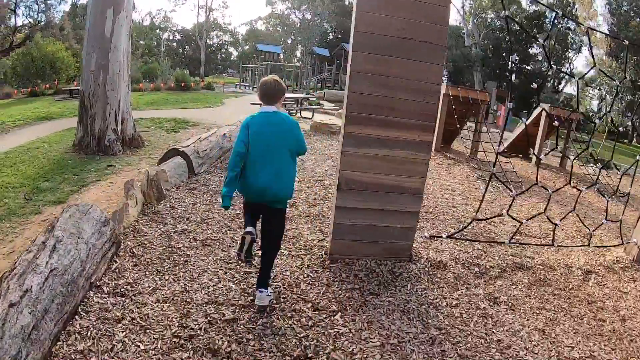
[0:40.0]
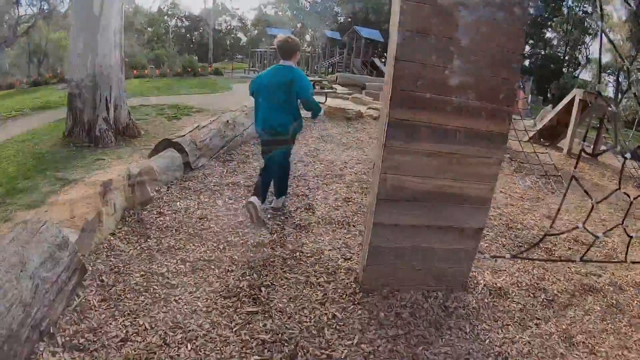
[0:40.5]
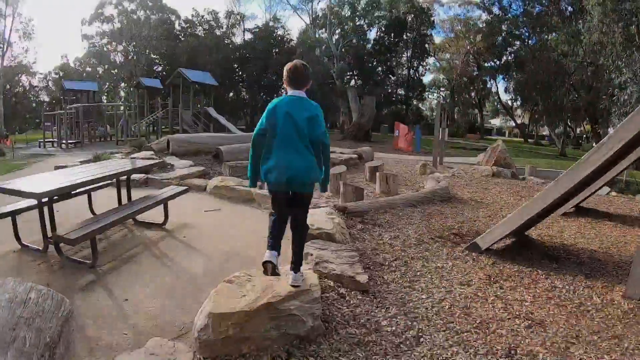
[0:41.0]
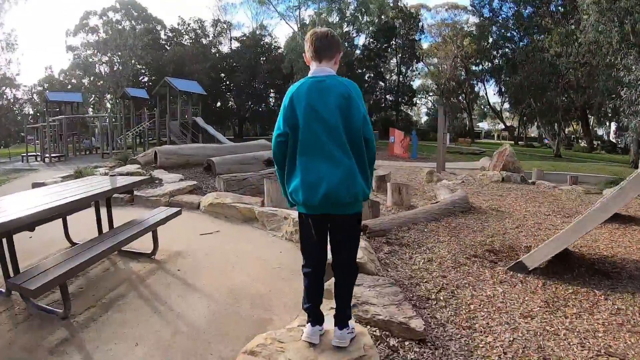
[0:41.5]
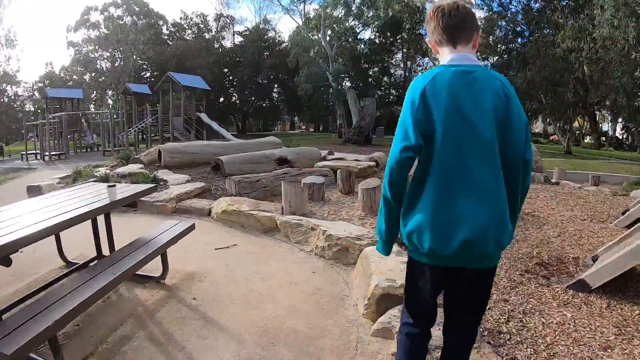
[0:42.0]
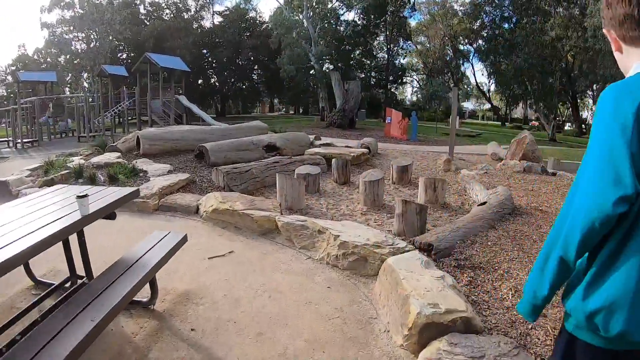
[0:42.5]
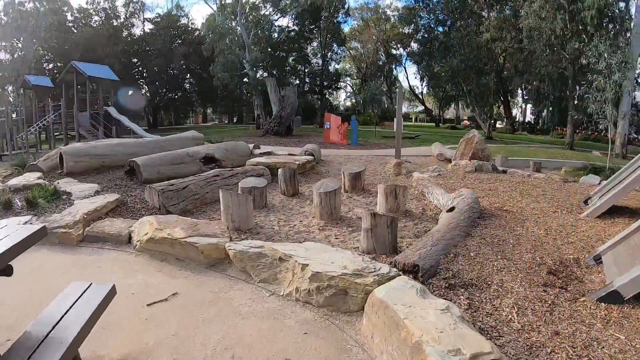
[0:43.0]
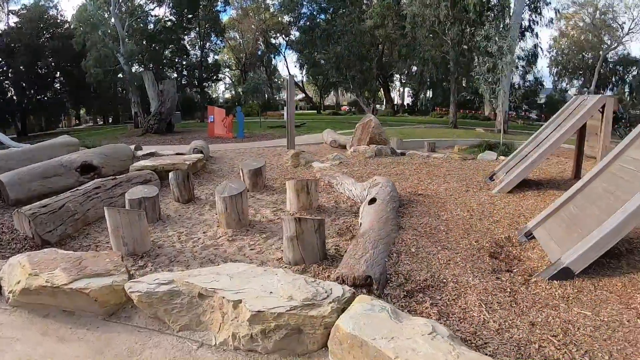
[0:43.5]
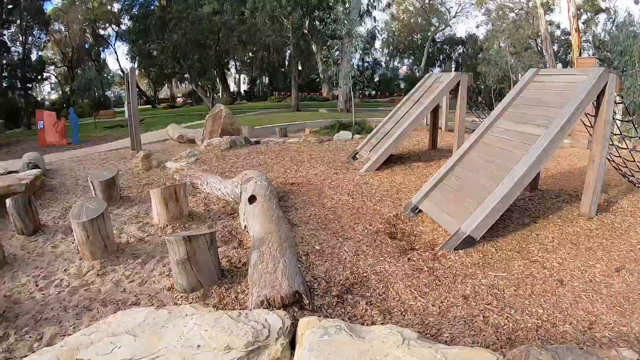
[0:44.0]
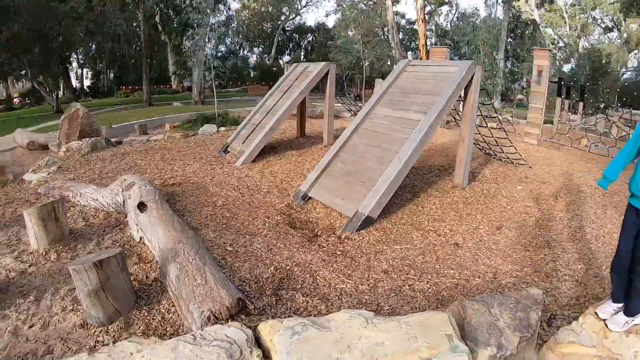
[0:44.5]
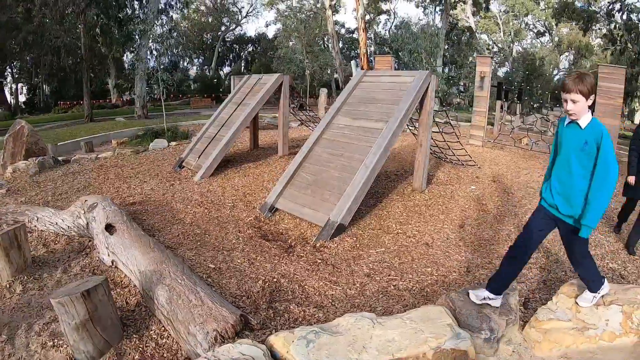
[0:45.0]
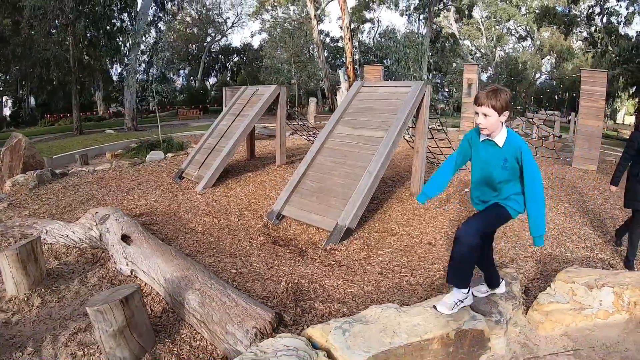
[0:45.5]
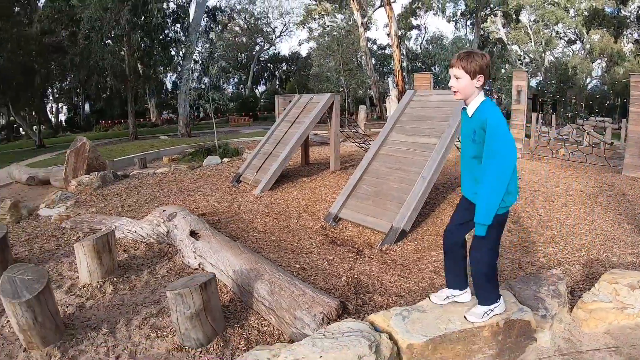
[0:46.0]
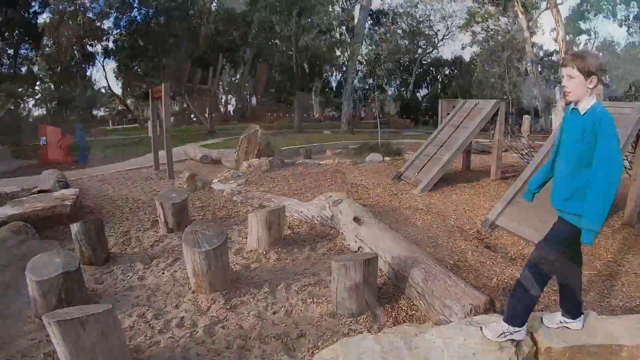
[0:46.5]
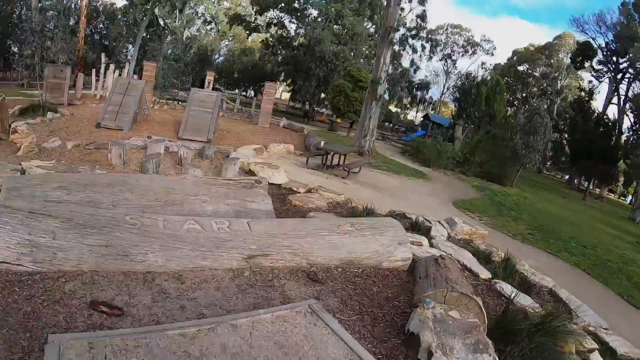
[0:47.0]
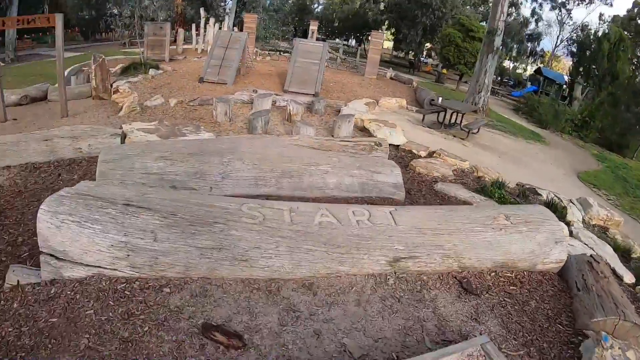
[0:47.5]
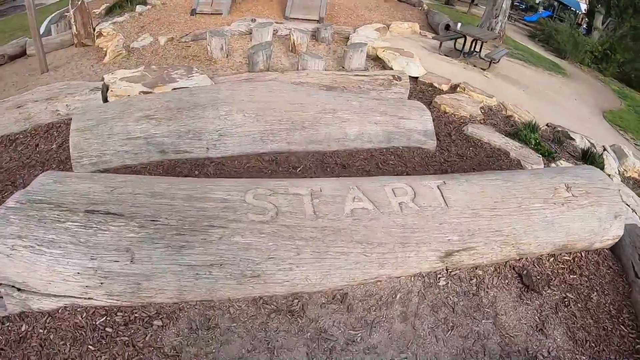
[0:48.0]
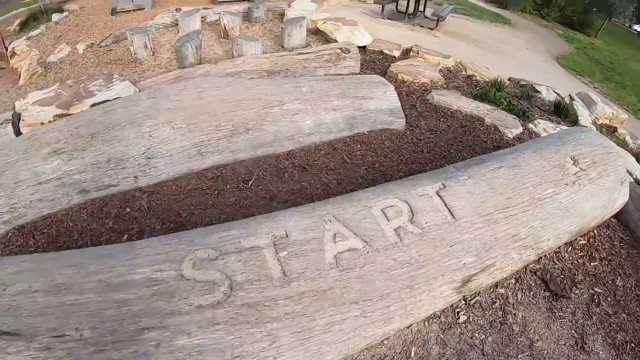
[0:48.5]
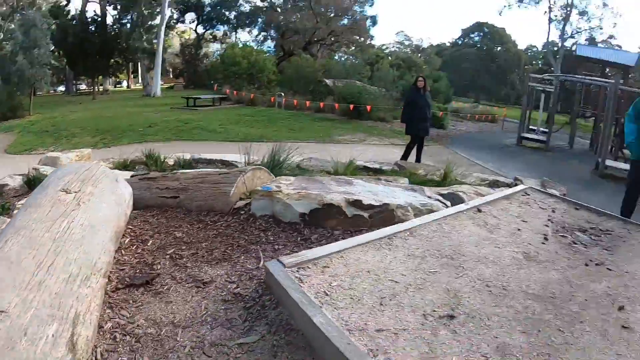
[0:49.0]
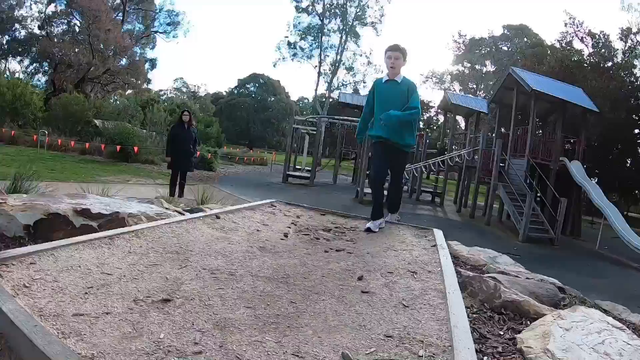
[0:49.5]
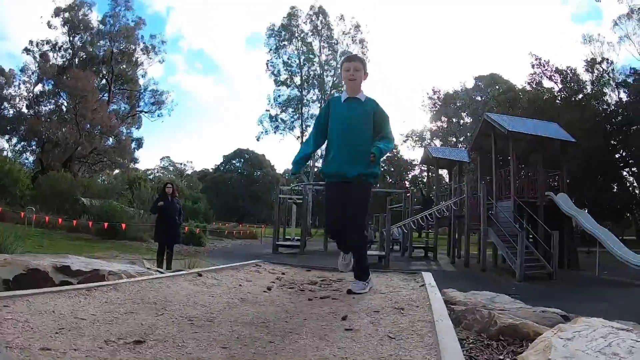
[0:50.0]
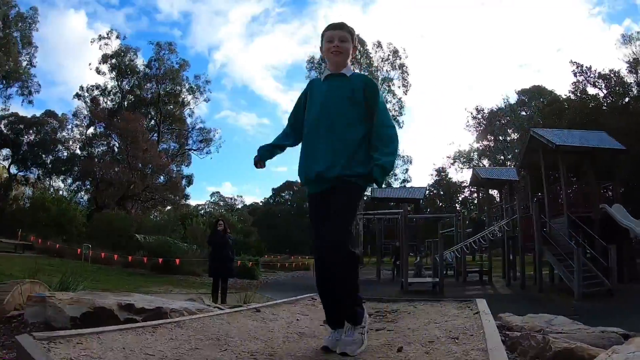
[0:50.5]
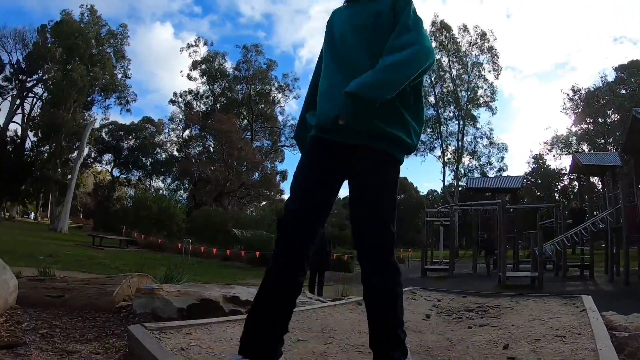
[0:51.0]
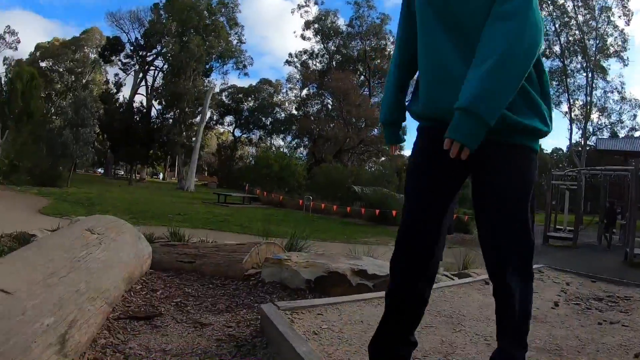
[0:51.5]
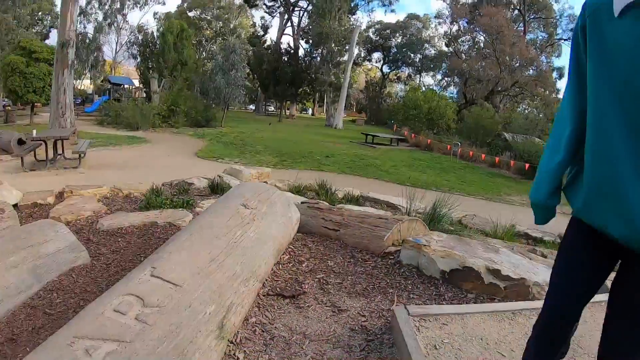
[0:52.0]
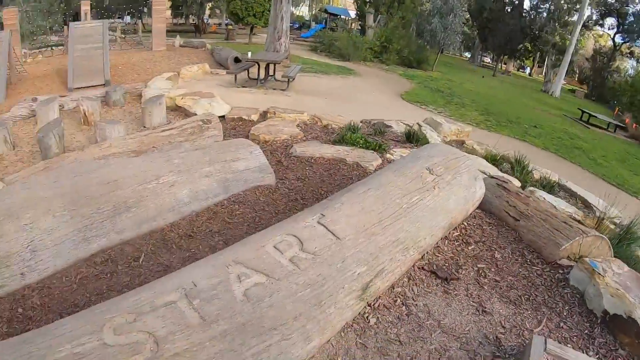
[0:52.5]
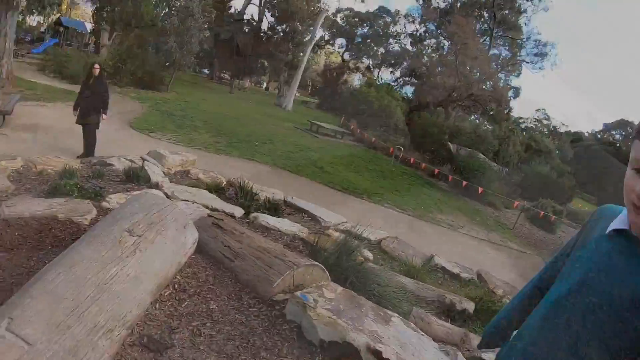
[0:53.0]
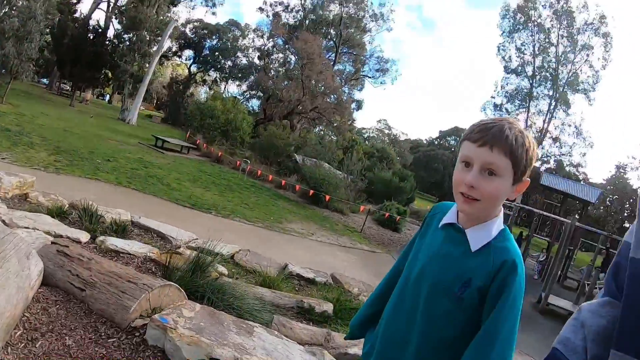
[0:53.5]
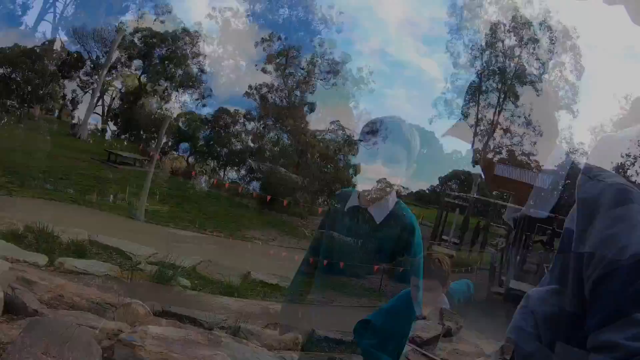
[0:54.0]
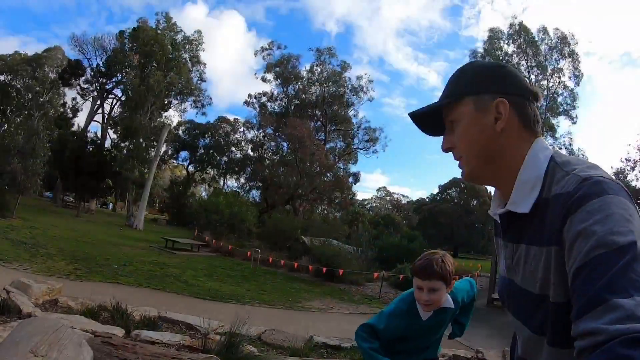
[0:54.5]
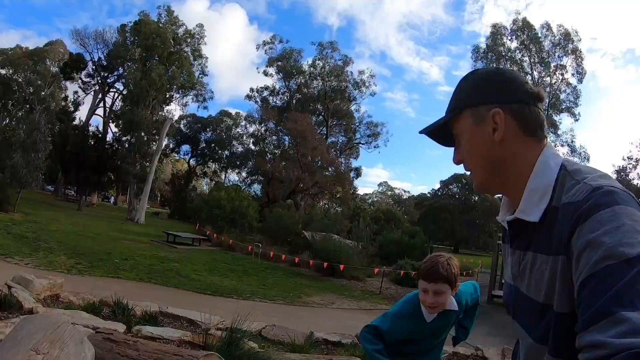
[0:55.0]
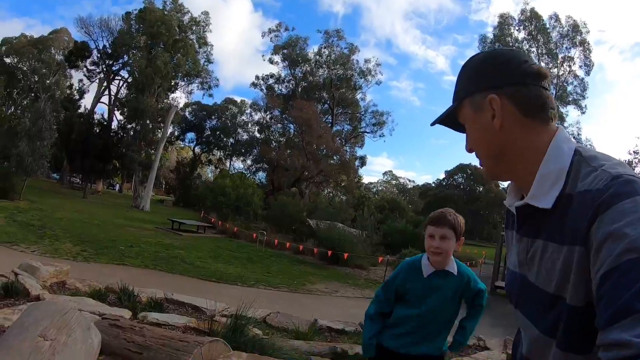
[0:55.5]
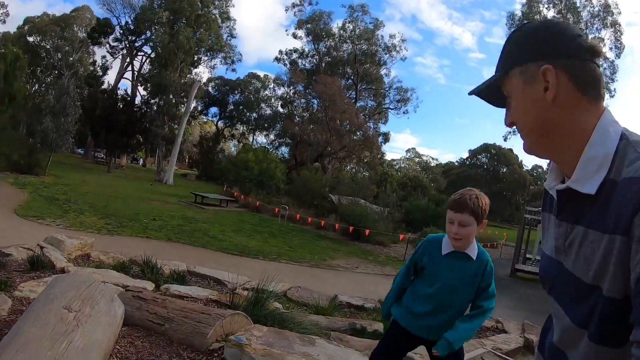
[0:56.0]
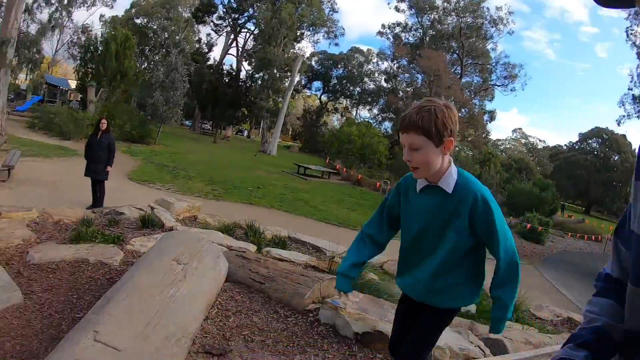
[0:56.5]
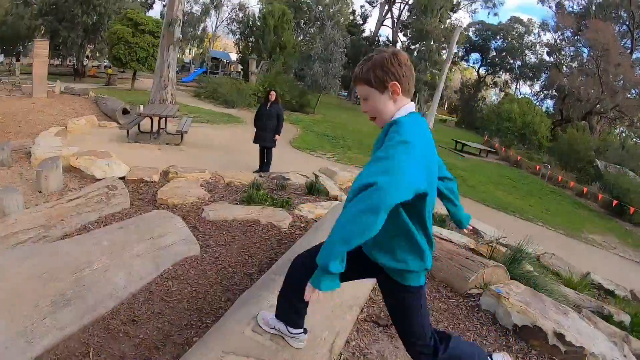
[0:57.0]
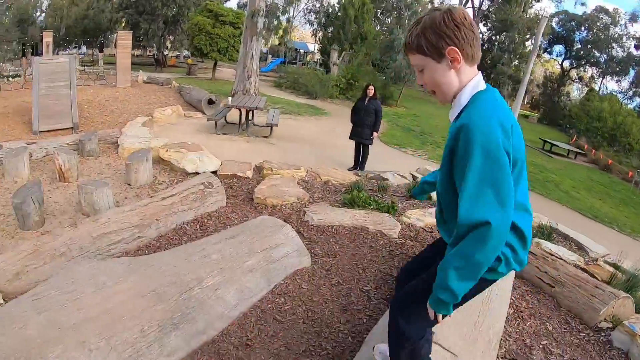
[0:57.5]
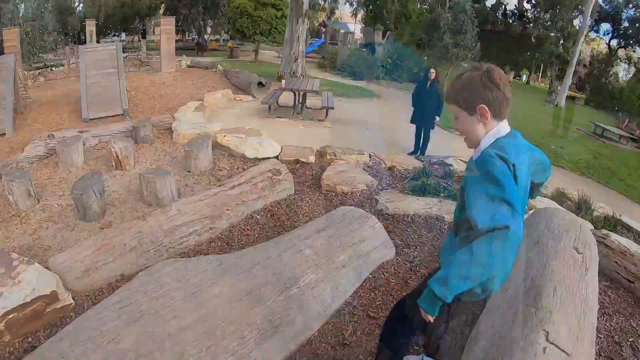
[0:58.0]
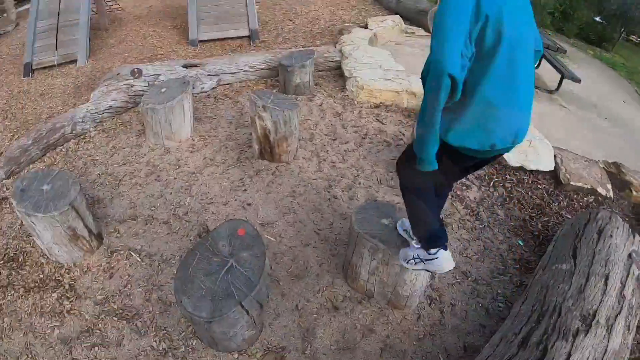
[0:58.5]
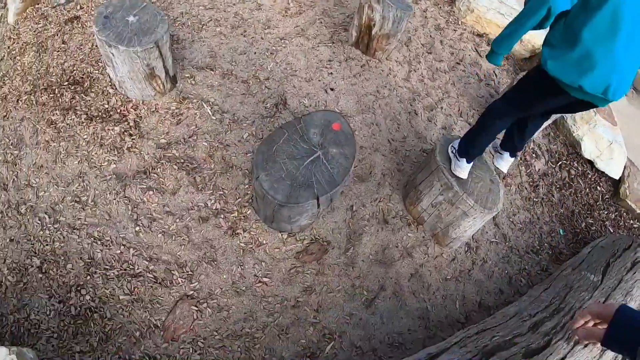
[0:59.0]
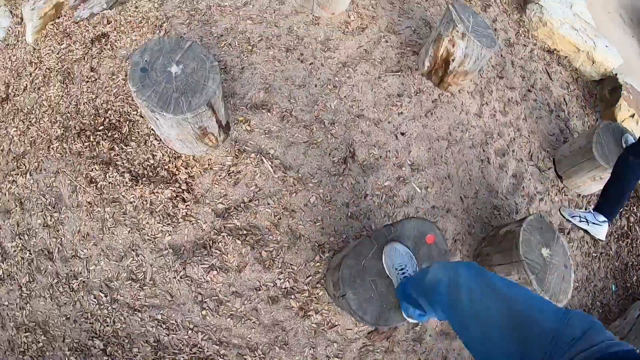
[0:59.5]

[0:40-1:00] From behind, the boy in his blue sweater, sneakers and black pants runs toward an attraction that is probably part of the ninja course. There is a net to the right, along with different logs and what look like different climbing structures, and there may be sawdust on the ground. The areas are sort of segregated, with logs around them, separate from the walking paths and greenery of the rest of the park. The boy runs ahead of the camera and seems to be checking over the separate activity areas. Some boards are slanted and propped up by other boards at the end, possibly for climbing or sliding. In front of the boy are tilted logs placed close to each other, which look like they might be for jumping from one to the other. After a cut, logs appear to have been placed on a steep slope. The camera swings right and the boy runs up to the start of the attraction and gets ready; the man appears to be coaching him. The boy steps from log to log and jumps down each log.